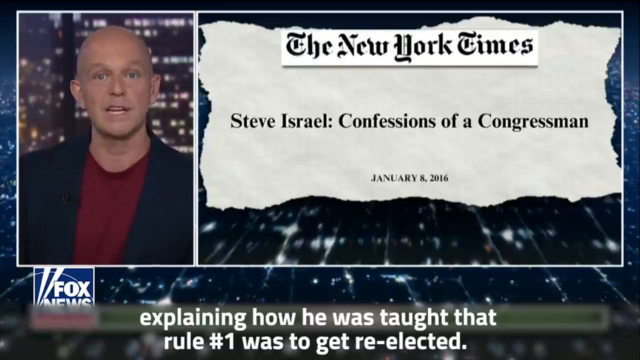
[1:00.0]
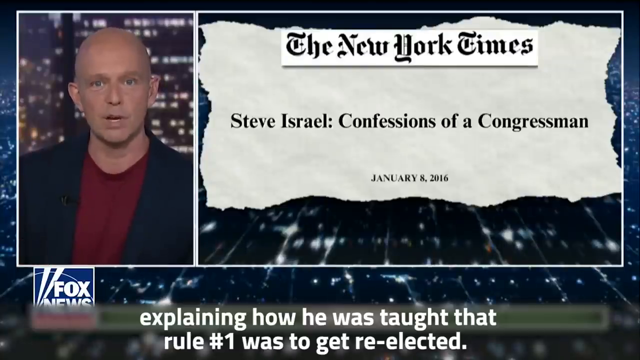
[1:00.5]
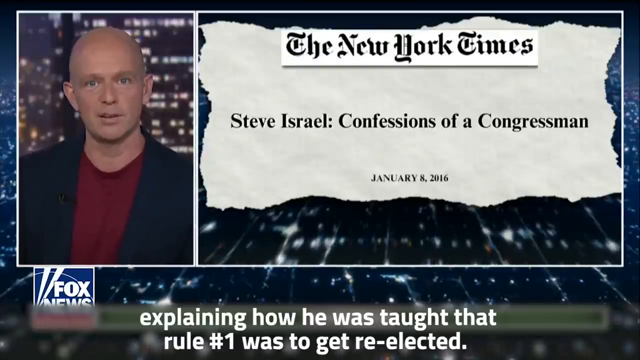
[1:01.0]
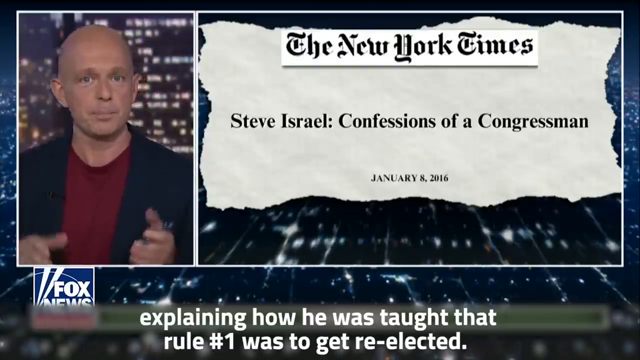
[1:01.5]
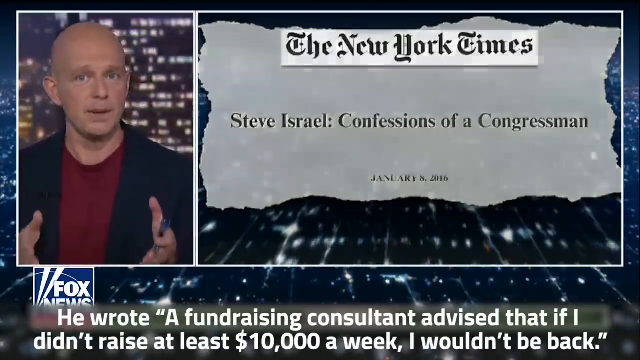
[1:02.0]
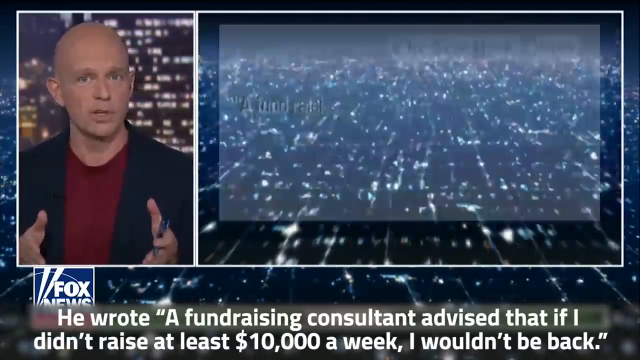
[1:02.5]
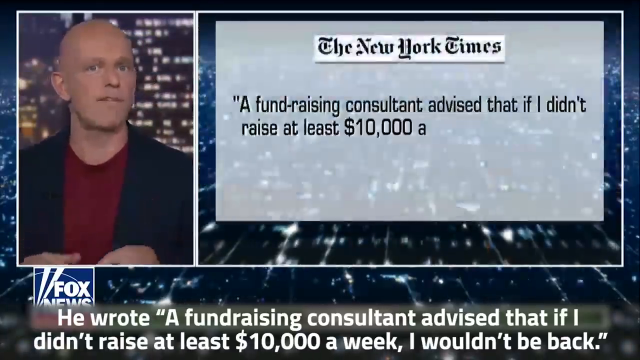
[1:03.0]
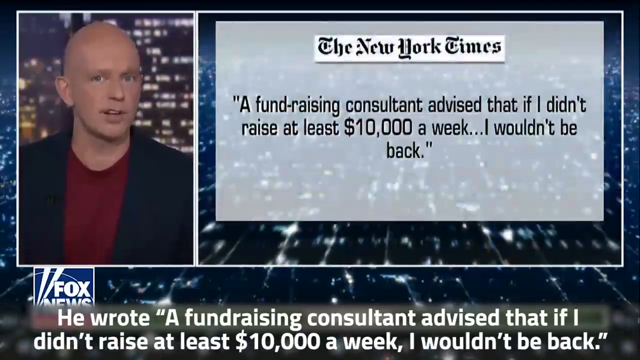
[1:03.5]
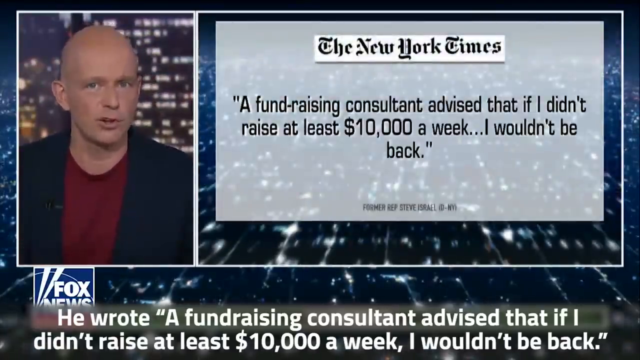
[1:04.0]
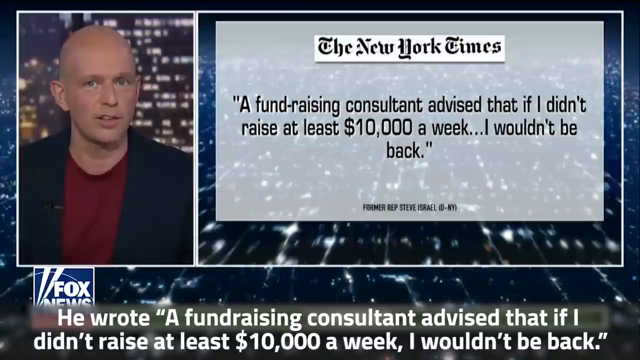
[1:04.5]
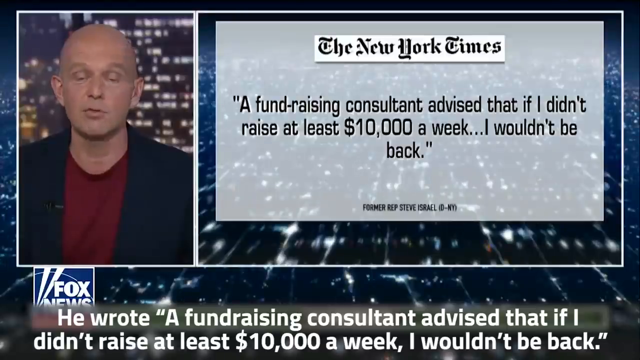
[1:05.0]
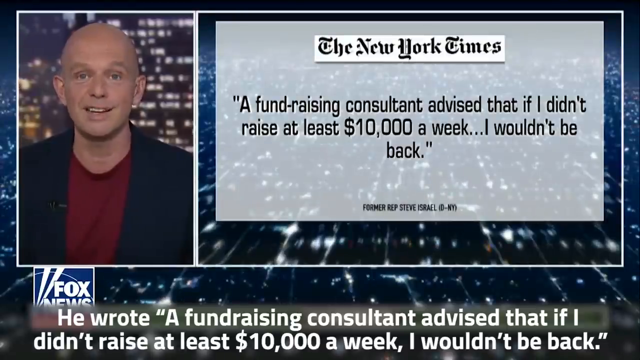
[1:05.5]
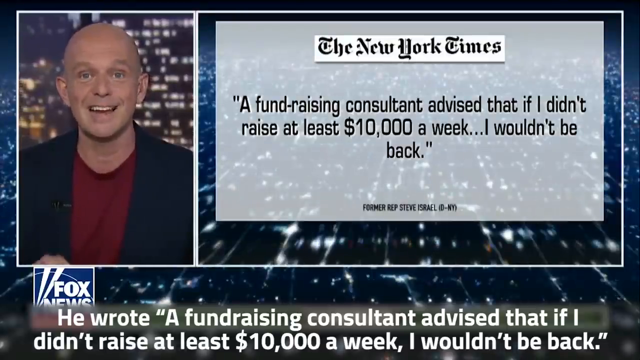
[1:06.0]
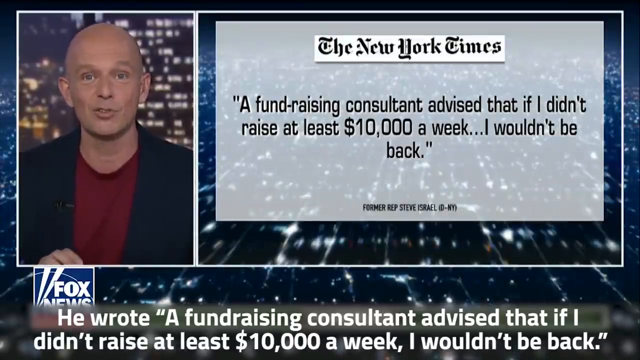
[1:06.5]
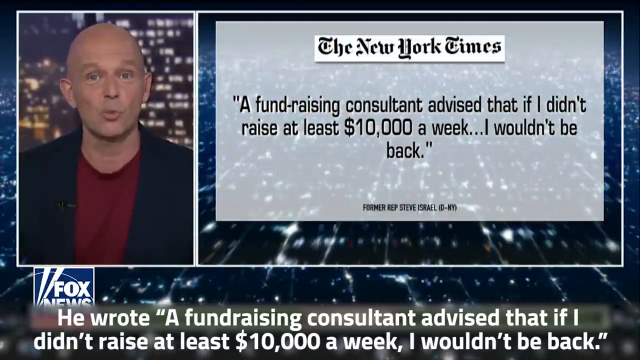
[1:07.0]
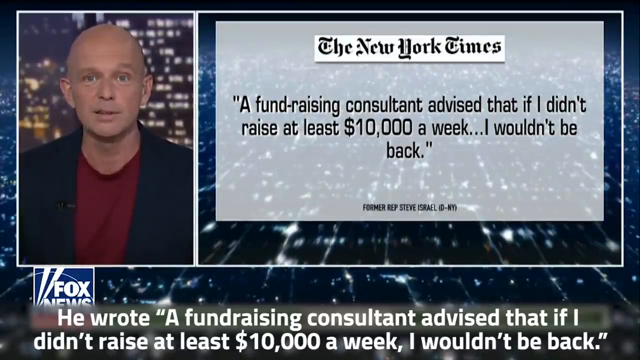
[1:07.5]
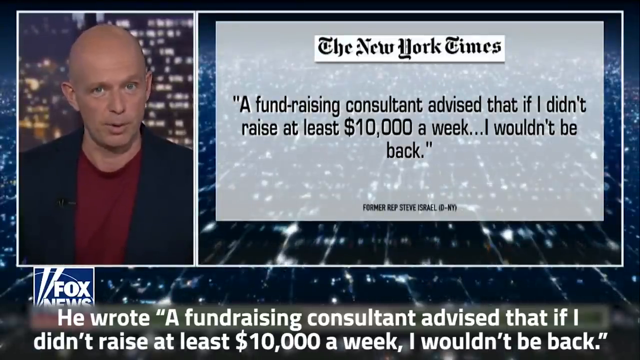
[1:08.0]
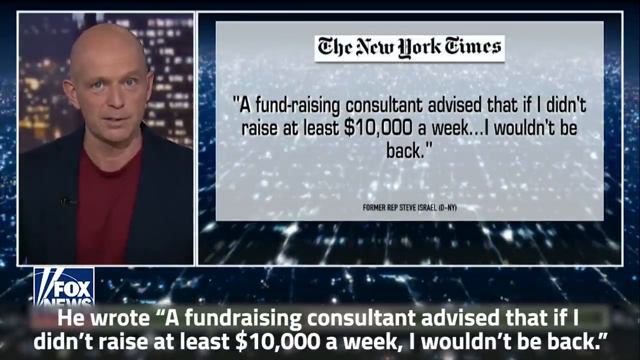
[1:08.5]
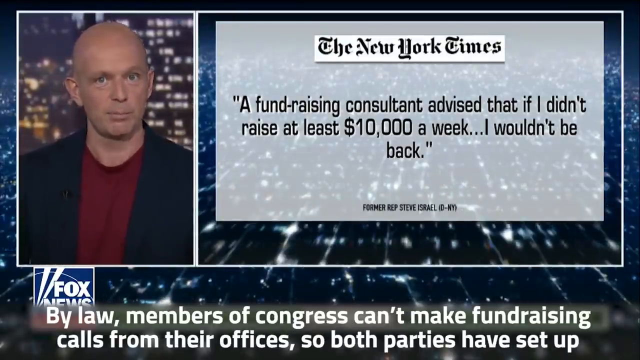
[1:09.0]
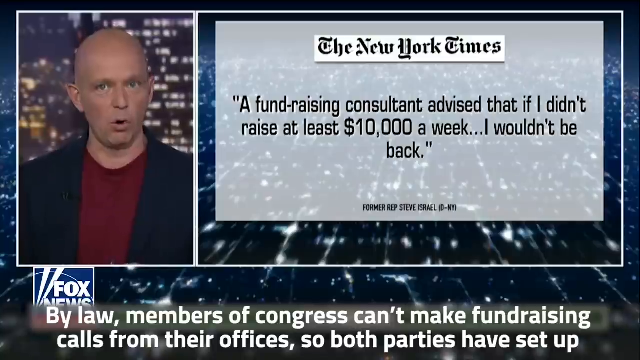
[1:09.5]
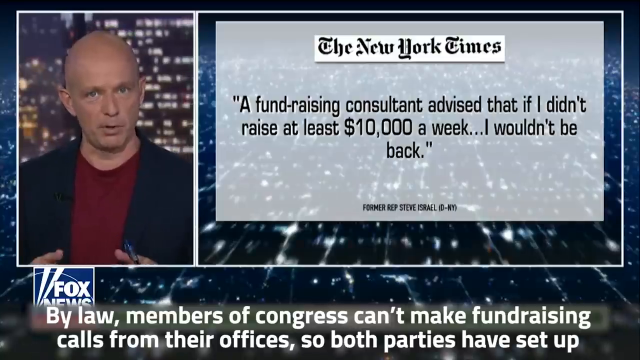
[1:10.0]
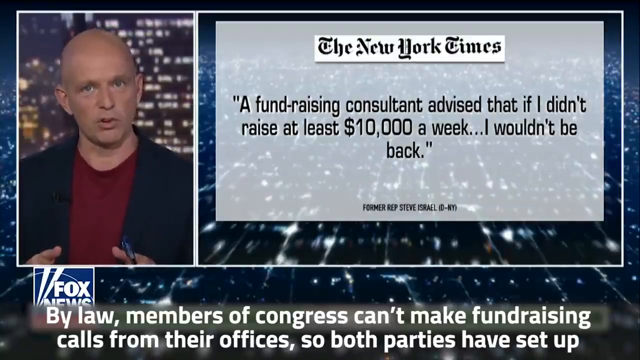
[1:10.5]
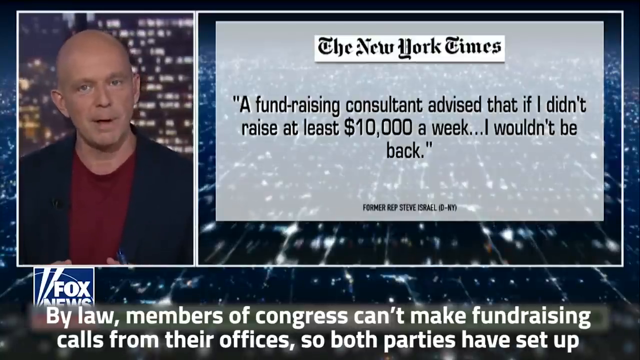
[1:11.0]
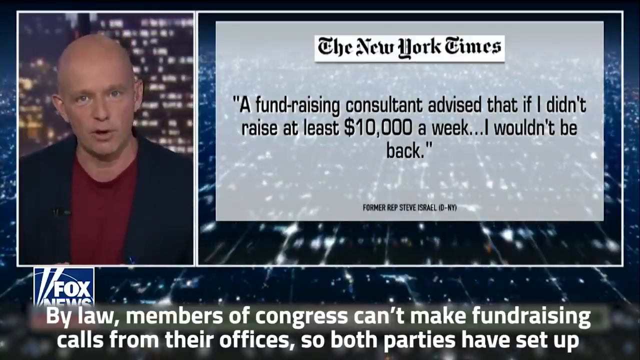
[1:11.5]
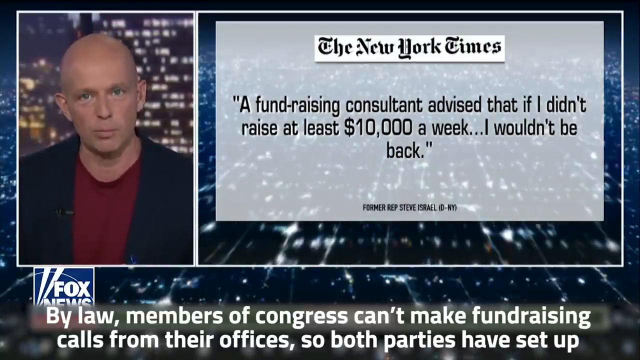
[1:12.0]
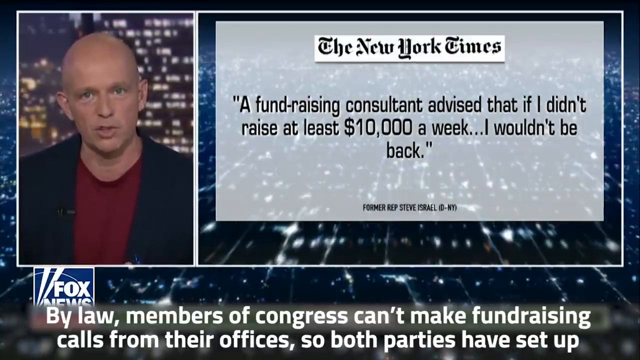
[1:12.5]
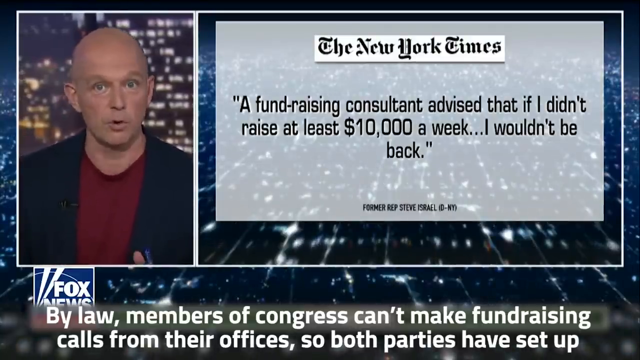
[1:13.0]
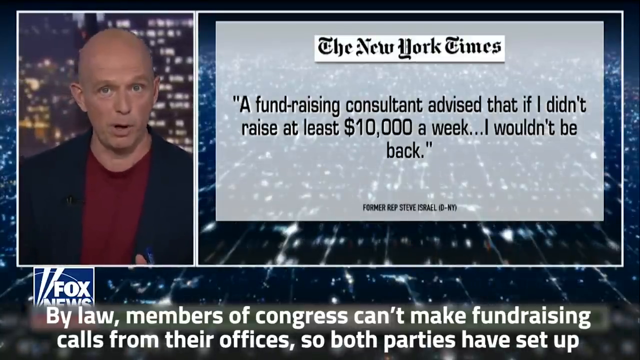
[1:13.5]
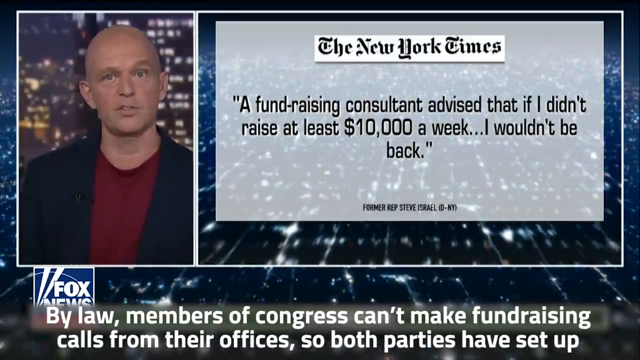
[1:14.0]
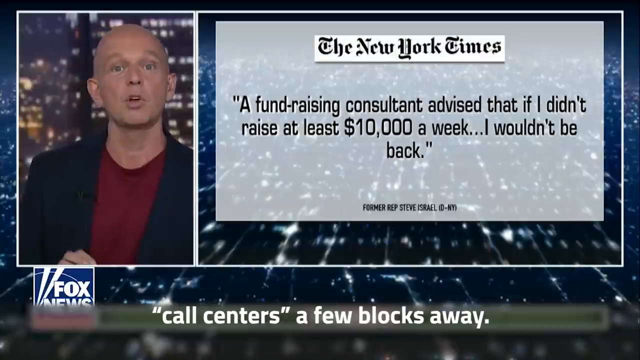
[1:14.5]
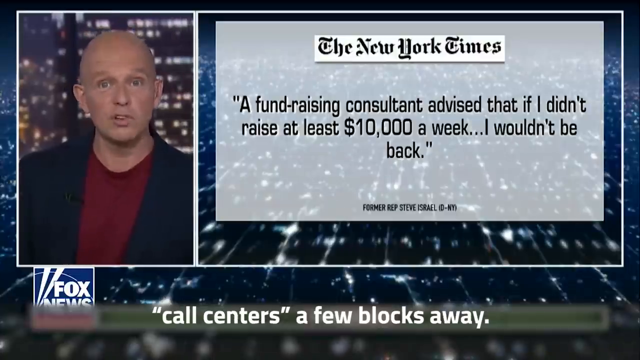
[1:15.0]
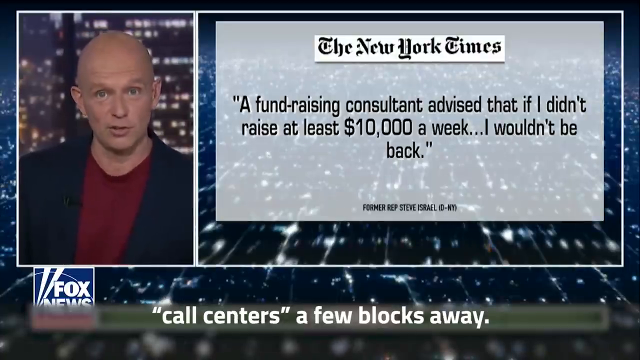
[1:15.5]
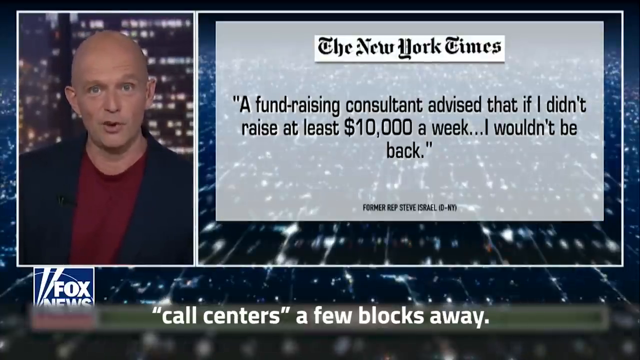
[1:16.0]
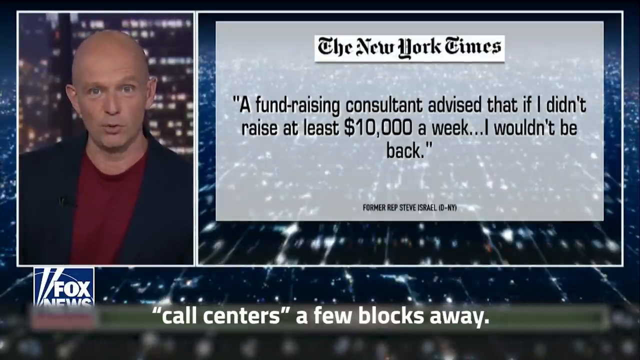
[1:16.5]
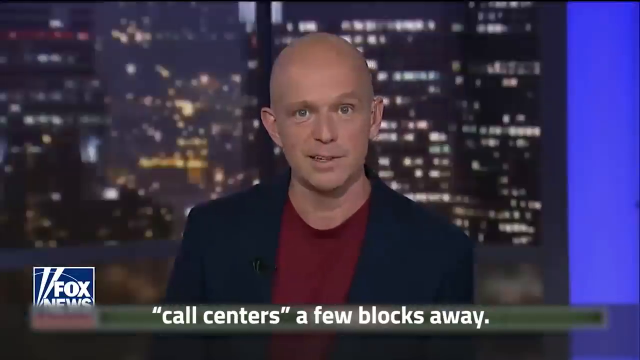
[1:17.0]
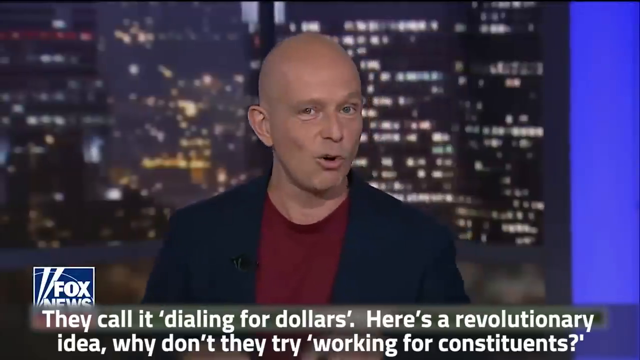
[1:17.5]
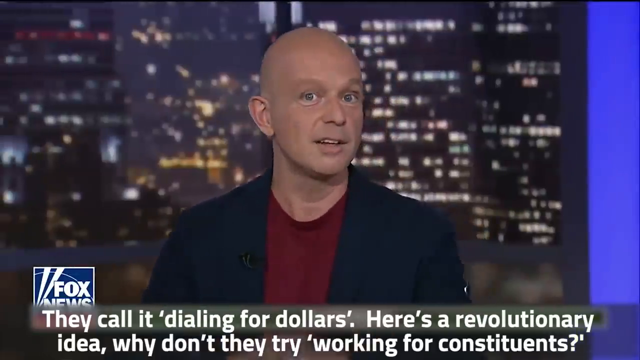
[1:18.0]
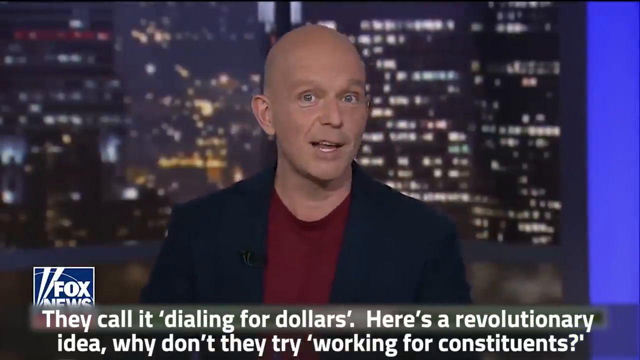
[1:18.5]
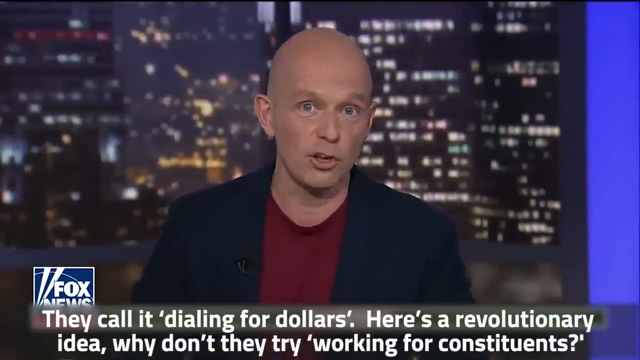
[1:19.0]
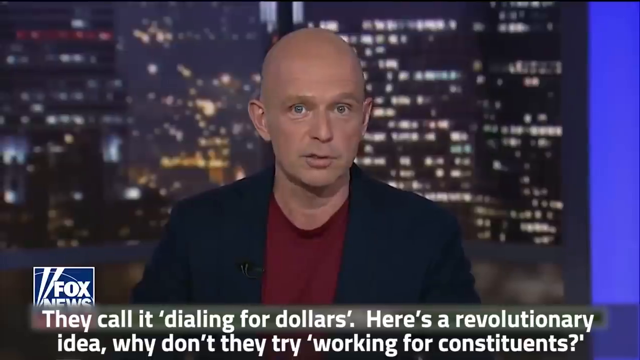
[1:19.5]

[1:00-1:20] The Fox News reporter appears on TV beside a New York Times excerpt on the other side of the screen. It reads "a fund-raising consultant advised that if I did not raise at least $10,000 a week, I would not be back. By the law, members of Congress cannot make fundraising" calls from their office, and "They call it dialing for dollars." The newspaper piece is dated January 8, 2016.